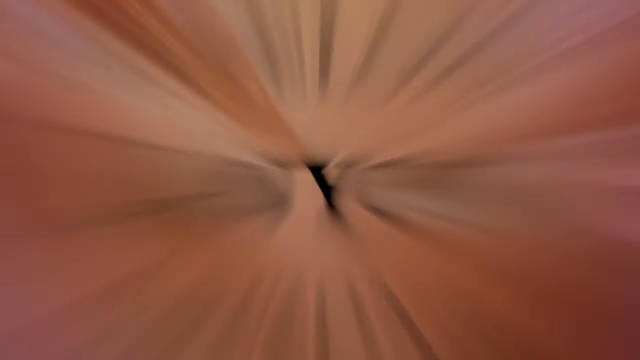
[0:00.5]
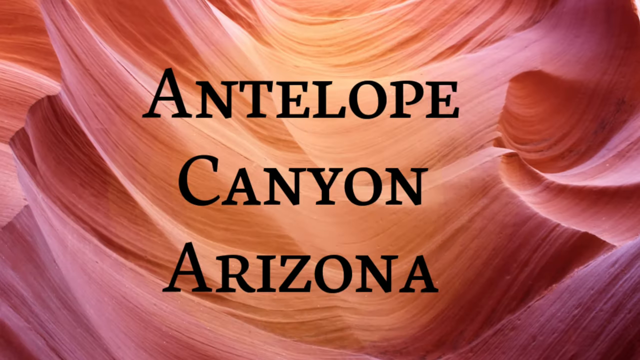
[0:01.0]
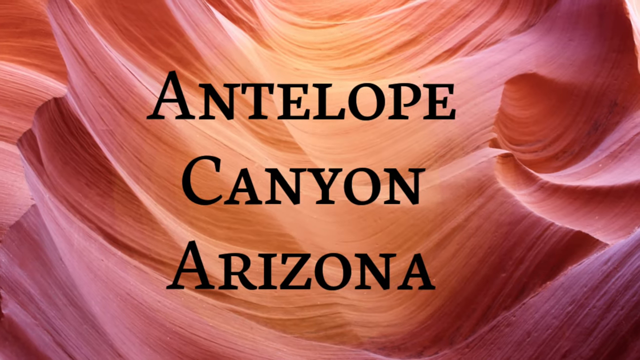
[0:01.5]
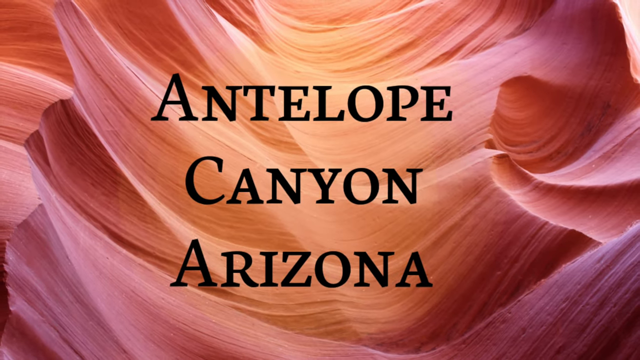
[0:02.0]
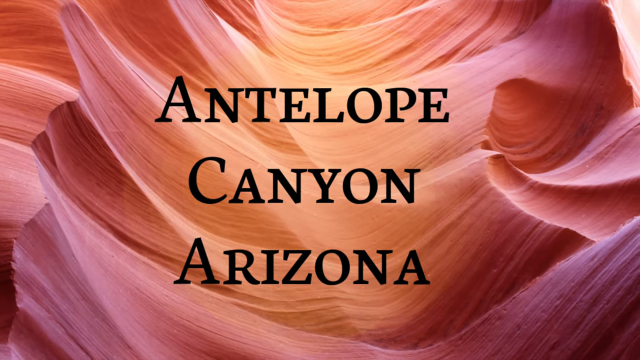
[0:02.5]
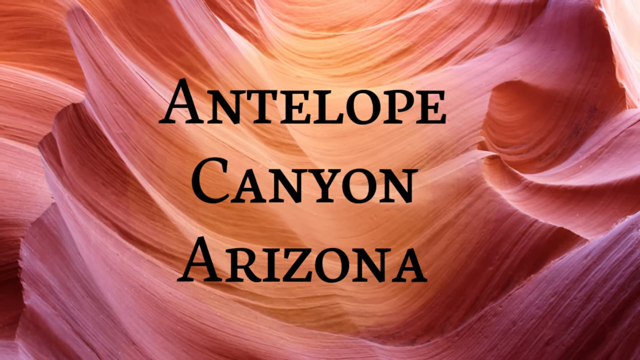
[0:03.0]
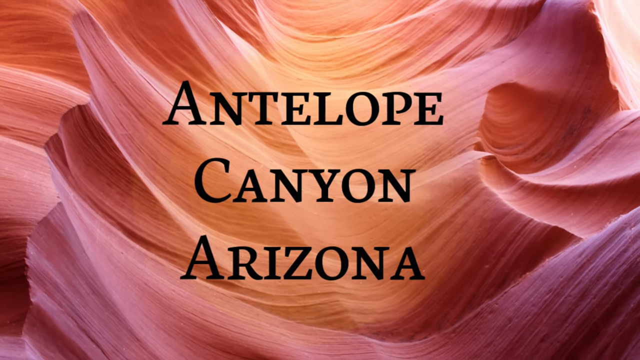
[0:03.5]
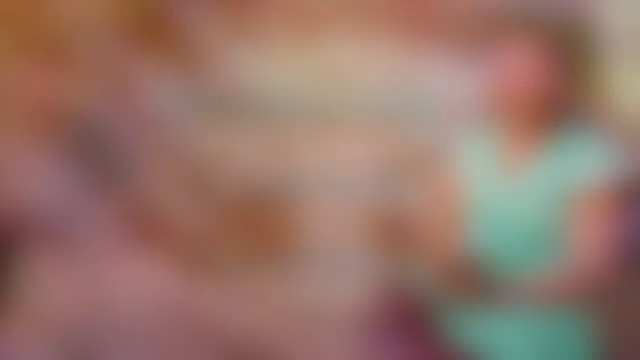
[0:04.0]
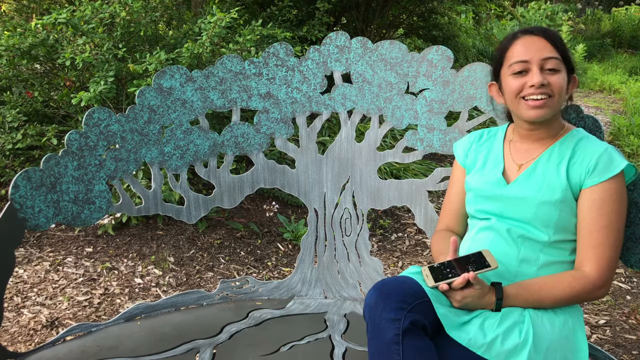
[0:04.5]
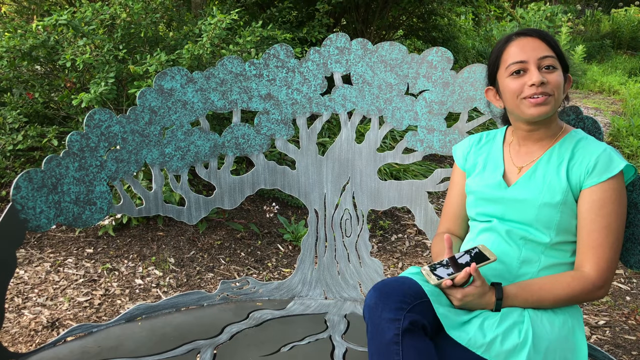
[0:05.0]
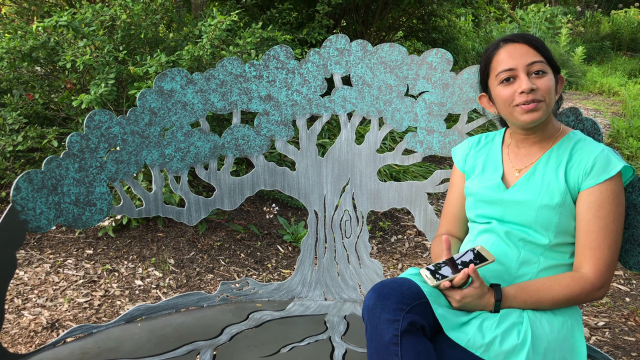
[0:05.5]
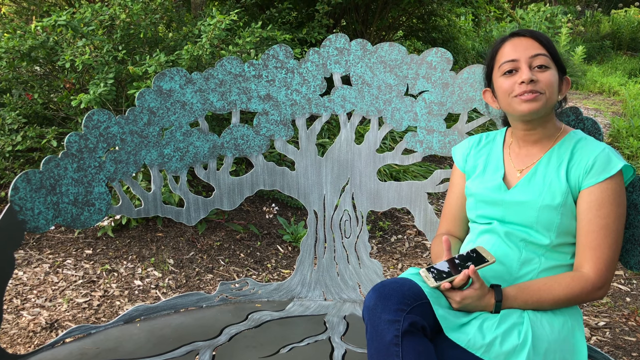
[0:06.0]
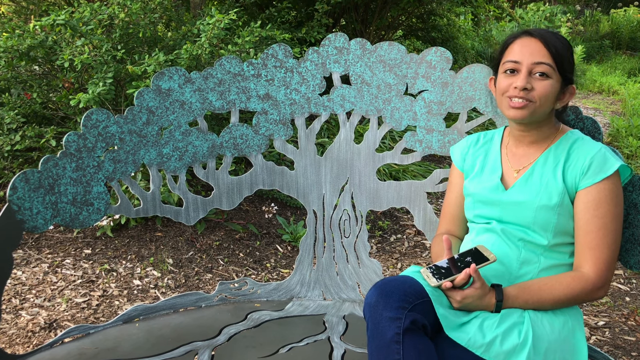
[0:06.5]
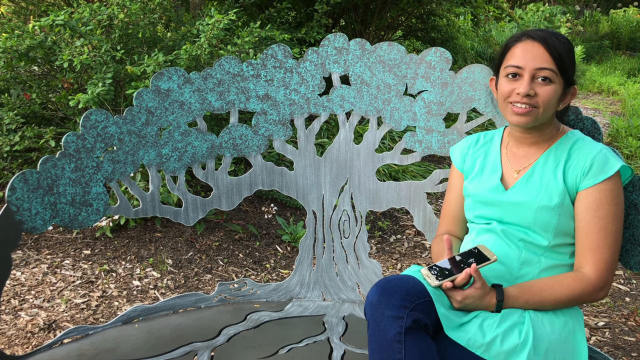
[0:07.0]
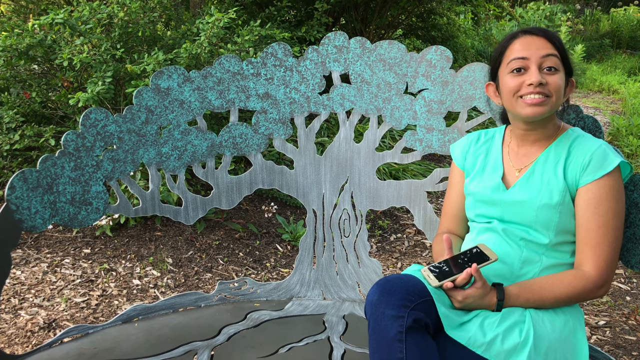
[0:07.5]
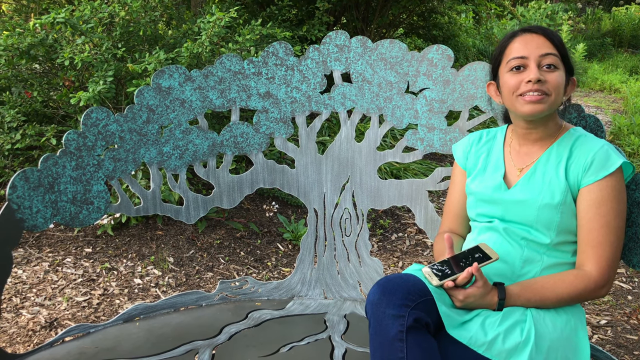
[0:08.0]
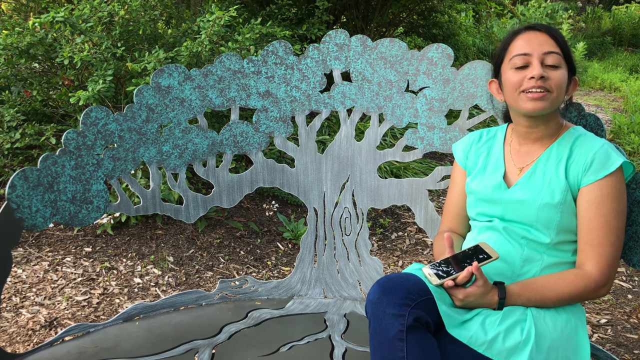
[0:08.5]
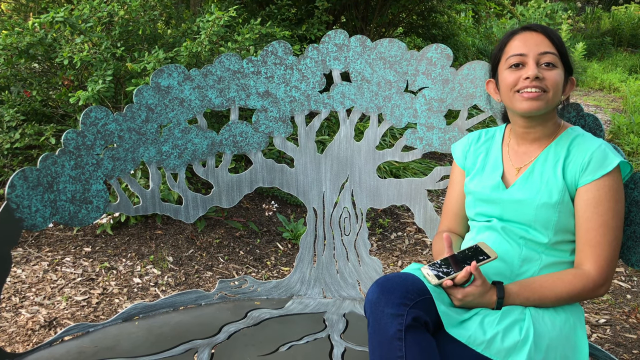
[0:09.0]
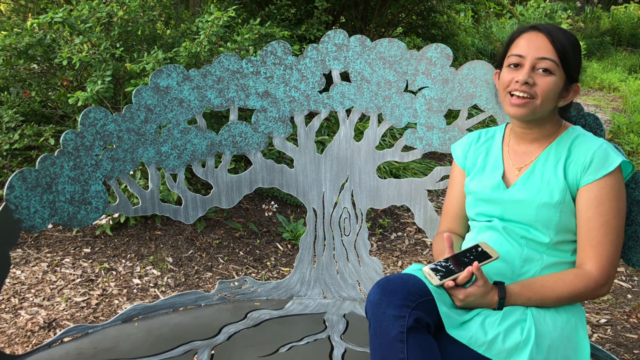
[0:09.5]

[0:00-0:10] A slideshow of Antelope Canyon, Arizona, appears on the screen over a brown and yellow background. The view zooms in on a woman wearing a navy blue dress and blue trousers. She holds a phone and has a black band on her left hand, and she is focused on the camera. On the other side of the frame is an illustration of a tree with white branches, and deeper in the background are green trees. She is speaking, with her eyes on the screen and a smile.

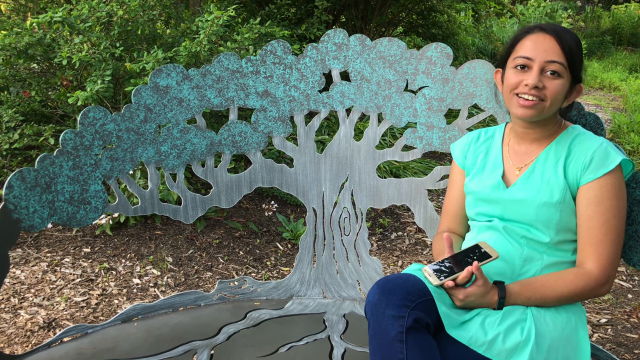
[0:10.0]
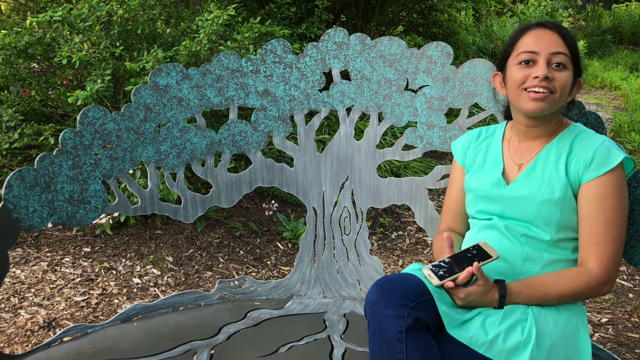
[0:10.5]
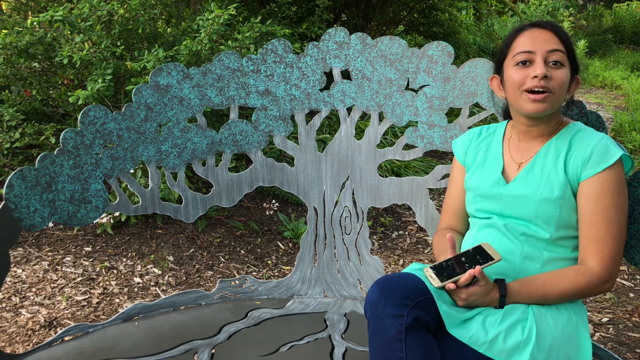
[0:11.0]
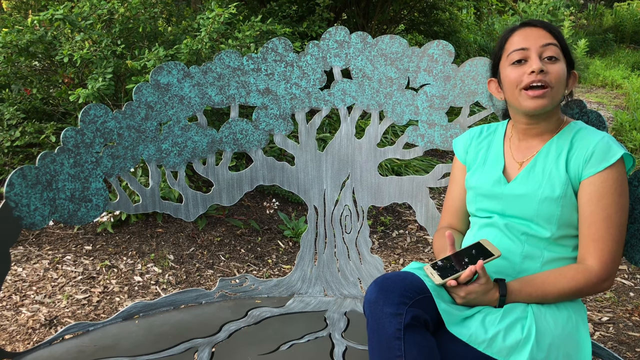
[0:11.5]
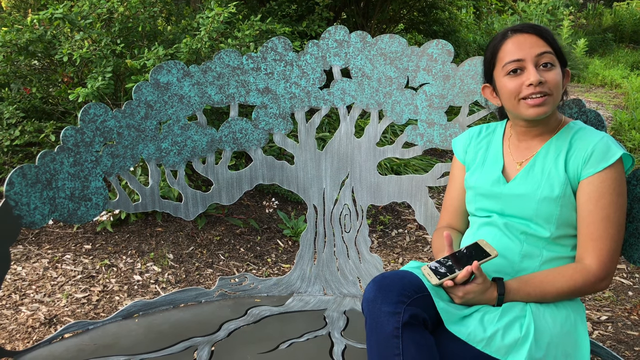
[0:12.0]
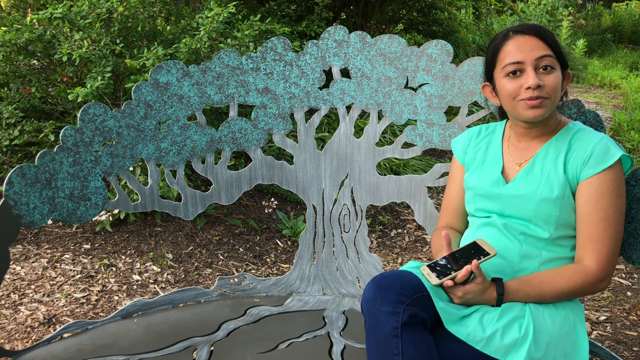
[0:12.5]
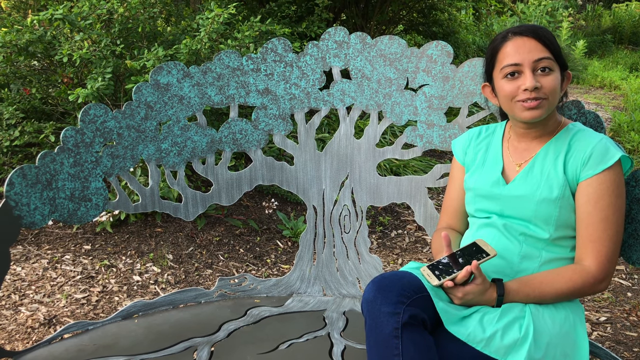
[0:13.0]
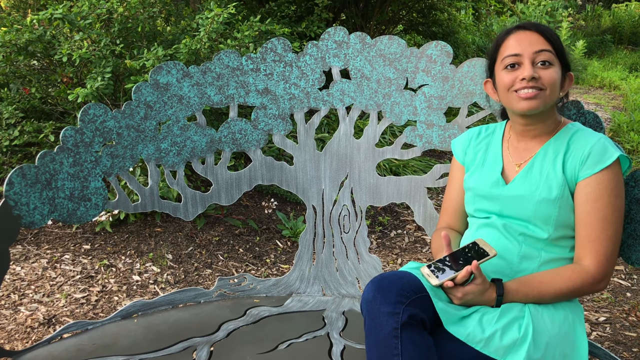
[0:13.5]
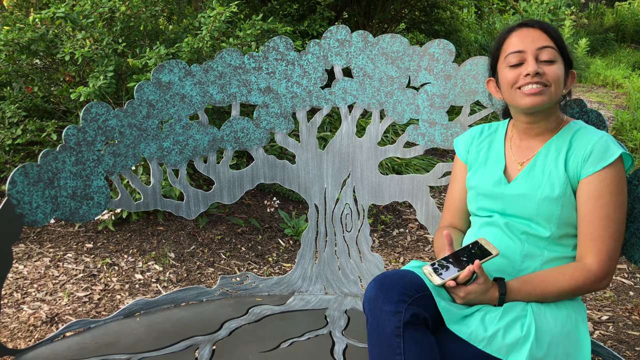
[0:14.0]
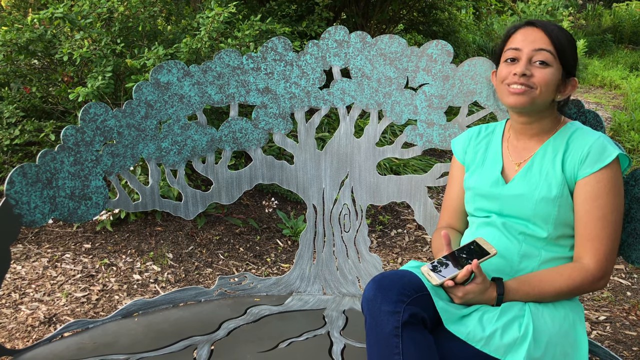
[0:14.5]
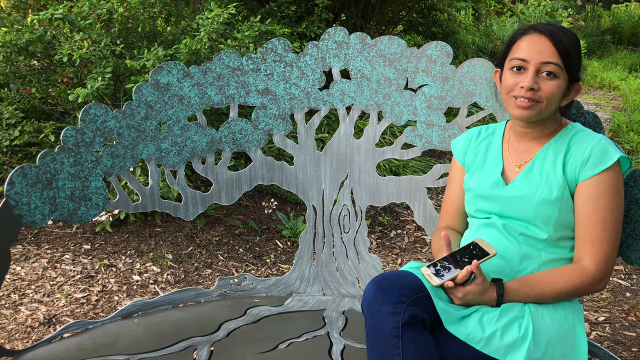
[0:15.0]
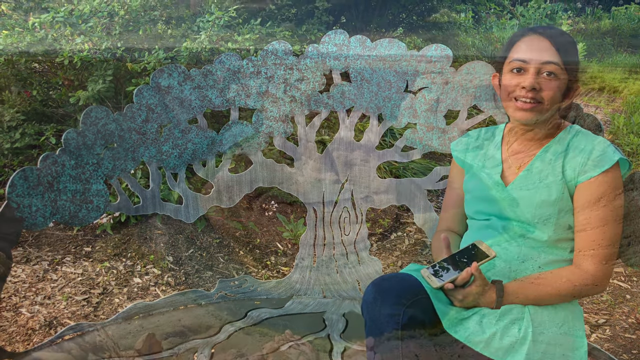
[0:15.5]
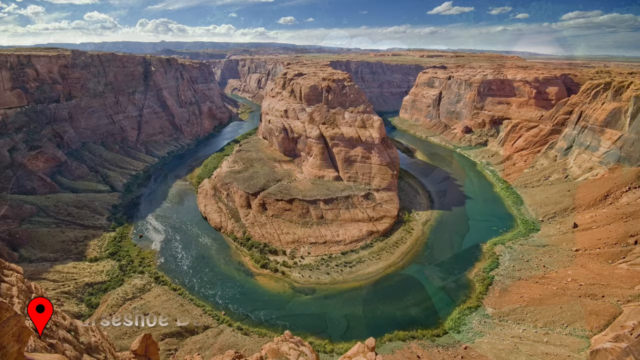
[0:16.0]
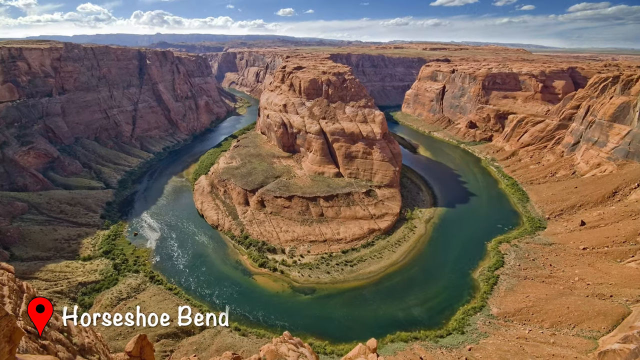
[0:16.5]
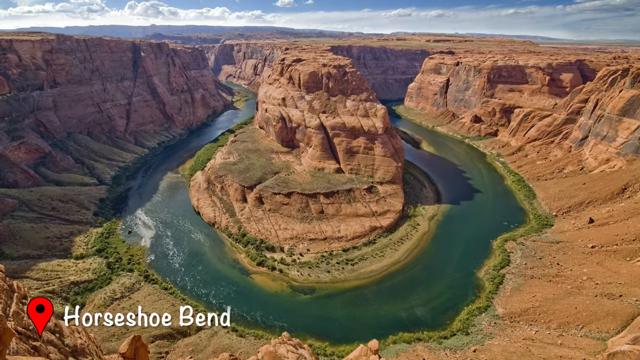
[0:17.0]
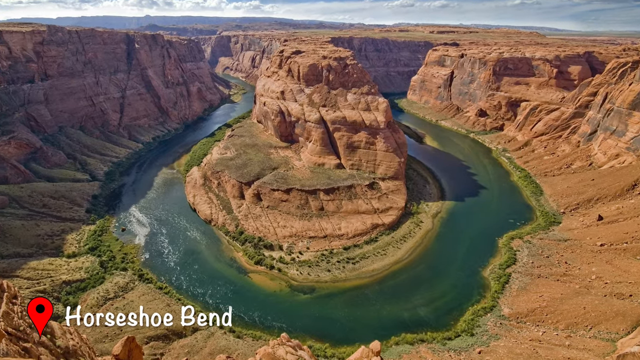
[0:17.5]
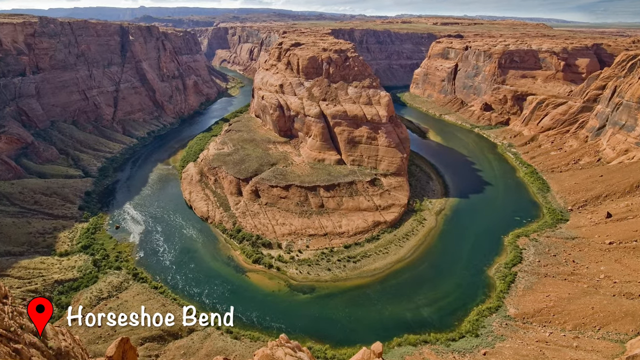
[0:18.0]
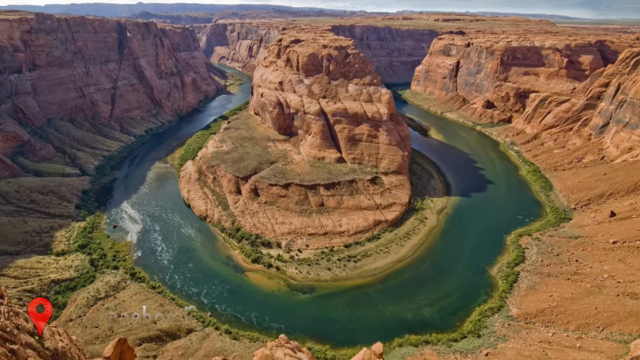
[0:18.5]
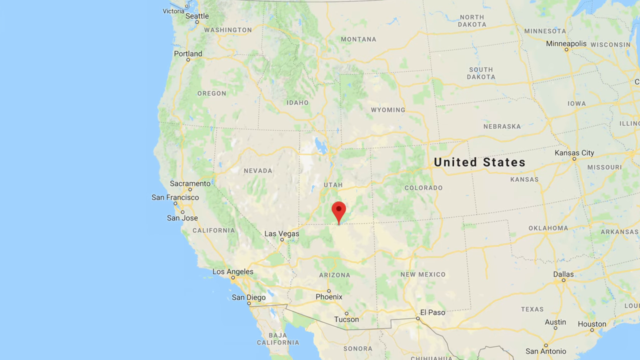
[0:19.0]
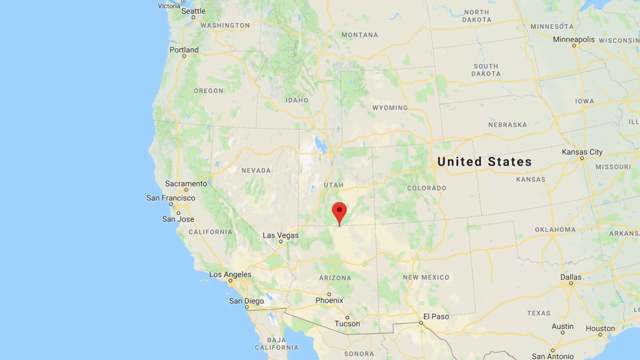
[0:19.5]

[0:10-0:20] The woman occupies the right side of the screen. She wears a light blue dress, a necklace and blue trousers, and has long black hair. Her mouth is open, and her eyes are white with bright black pupils. On the left side is an illustration of a tree, light blue in color, and in the background is green, bushy vegetation. She speaks while holding a phone in her hand, her eyes on the screen. Next comes an aerial view of an escarpment in what looks like a desert, with a lake surrounding the formation. The words "Aosu Band" appear as the name of the photo. A map of the United States follows.